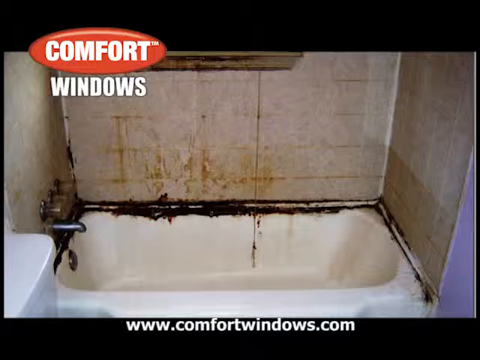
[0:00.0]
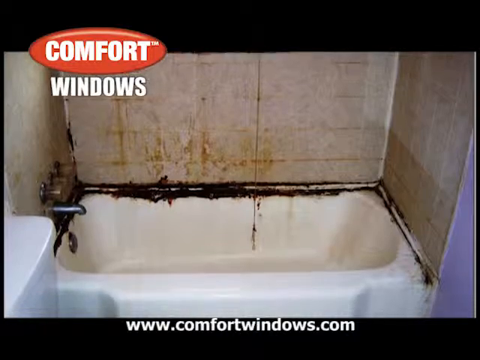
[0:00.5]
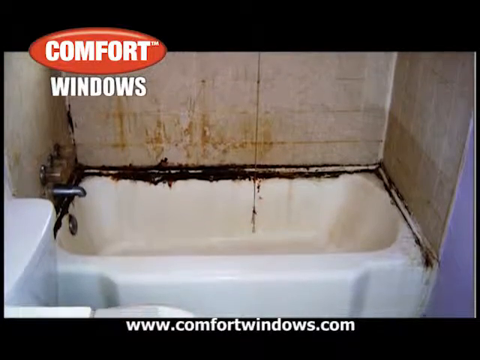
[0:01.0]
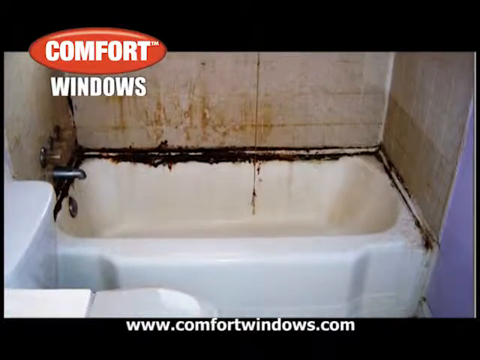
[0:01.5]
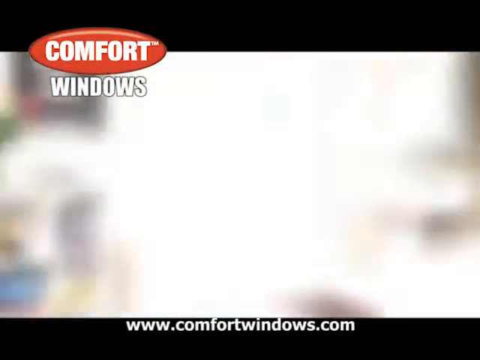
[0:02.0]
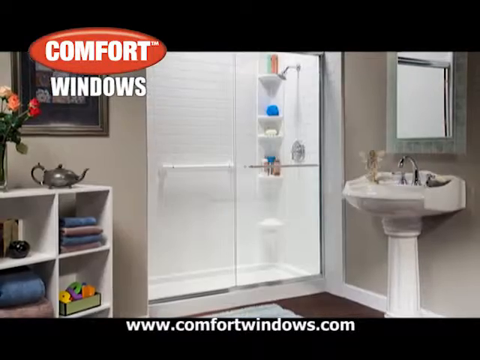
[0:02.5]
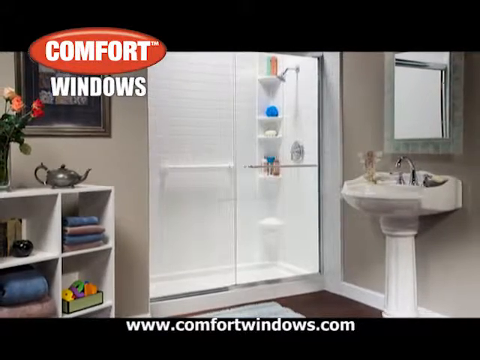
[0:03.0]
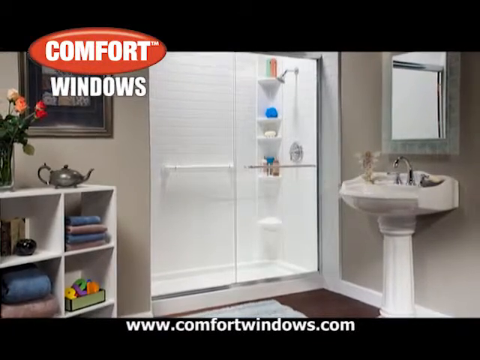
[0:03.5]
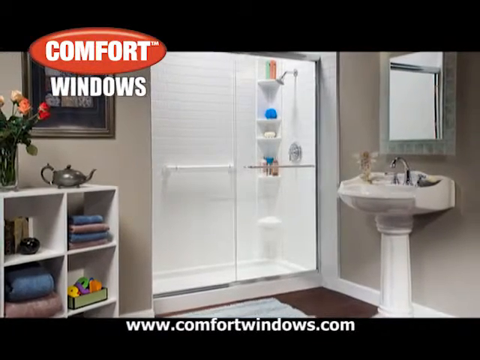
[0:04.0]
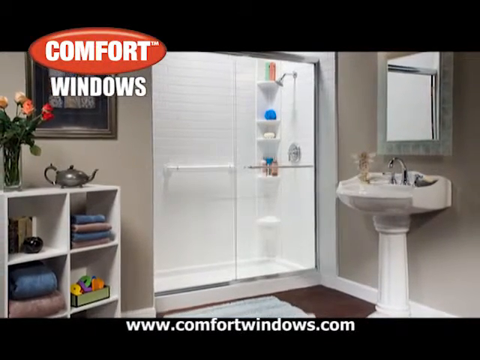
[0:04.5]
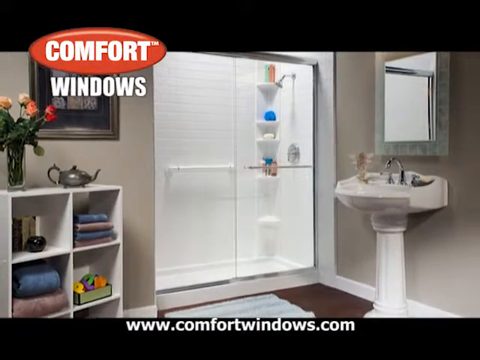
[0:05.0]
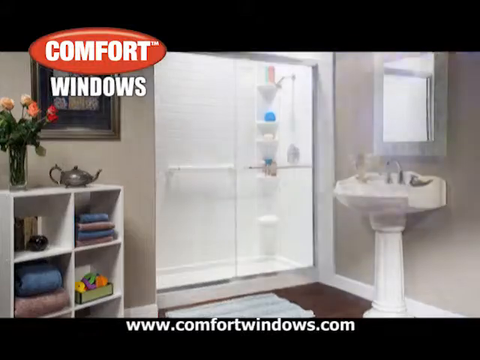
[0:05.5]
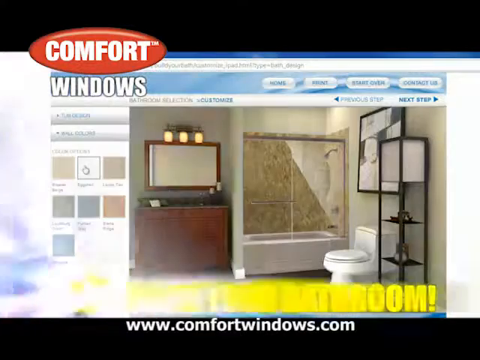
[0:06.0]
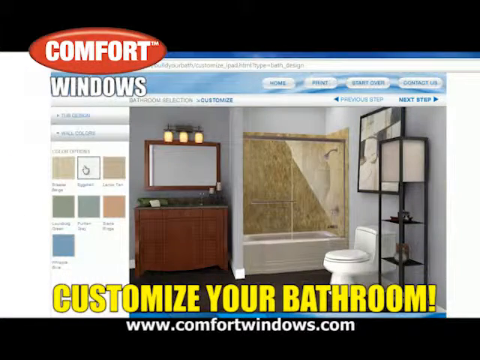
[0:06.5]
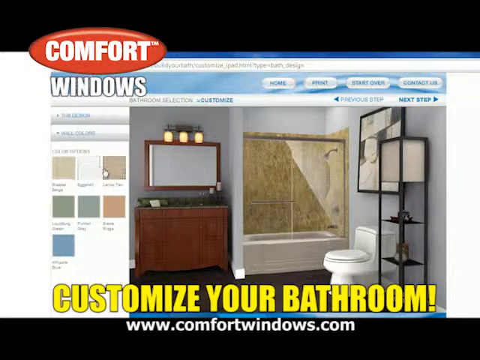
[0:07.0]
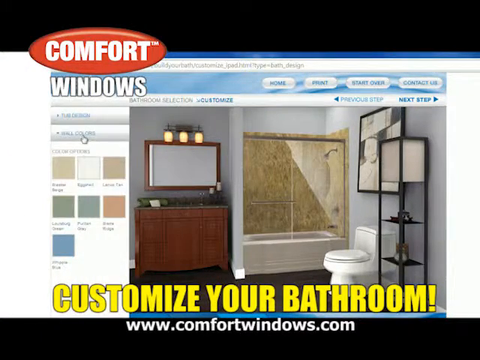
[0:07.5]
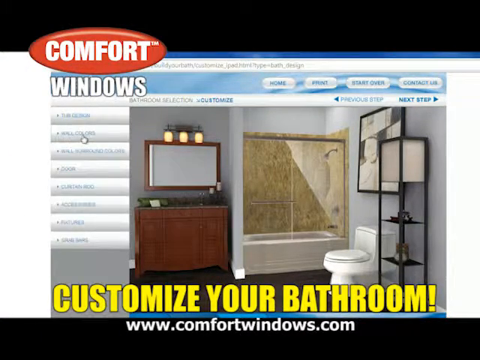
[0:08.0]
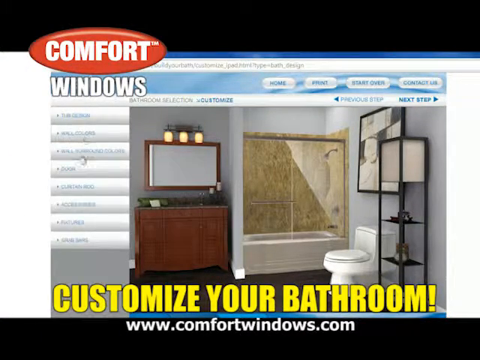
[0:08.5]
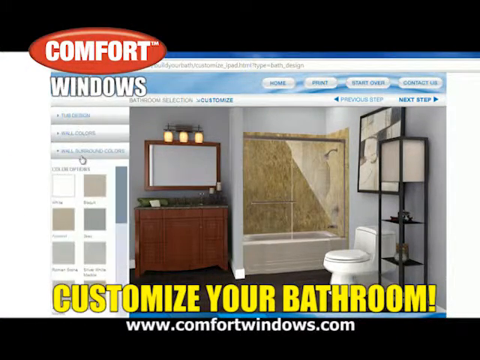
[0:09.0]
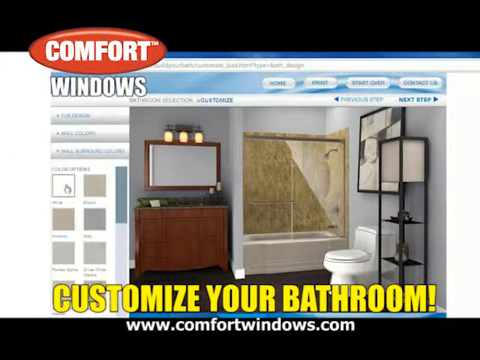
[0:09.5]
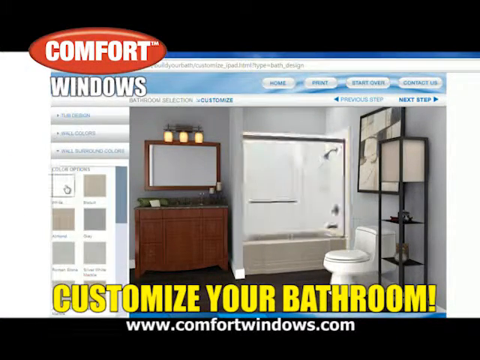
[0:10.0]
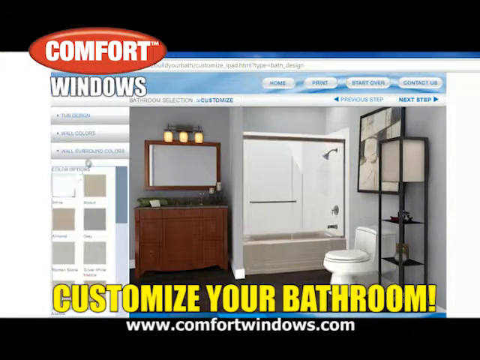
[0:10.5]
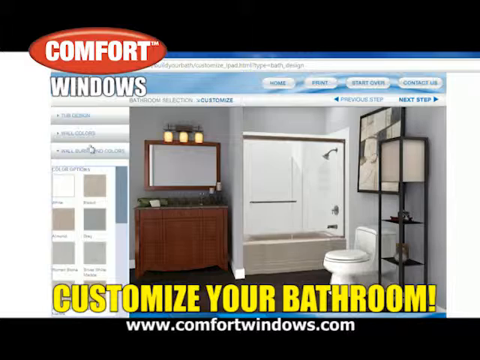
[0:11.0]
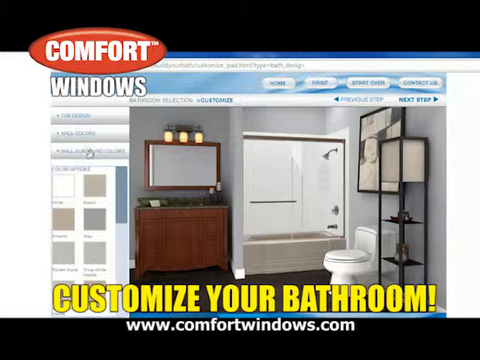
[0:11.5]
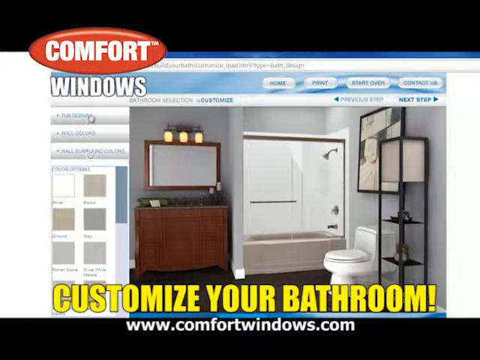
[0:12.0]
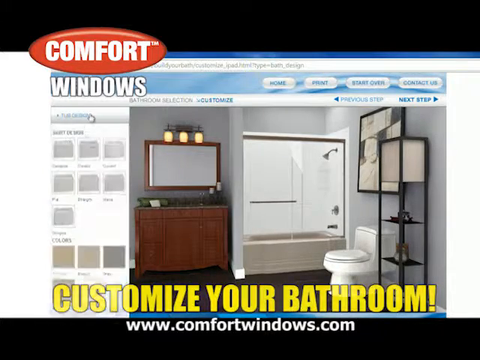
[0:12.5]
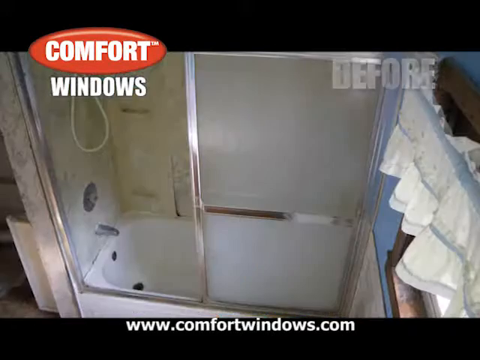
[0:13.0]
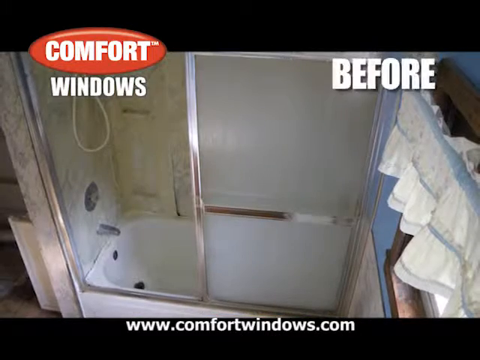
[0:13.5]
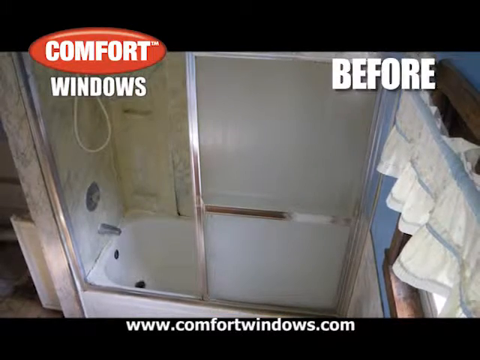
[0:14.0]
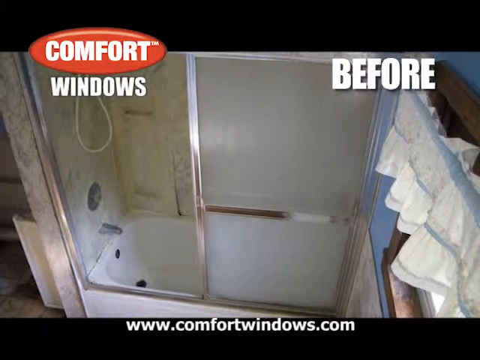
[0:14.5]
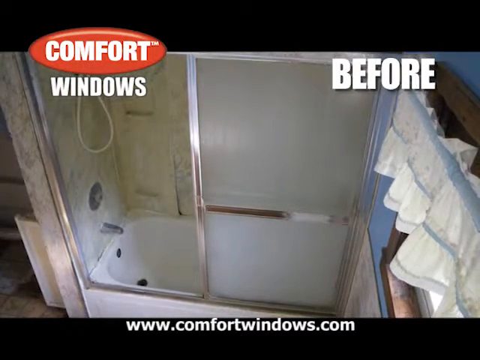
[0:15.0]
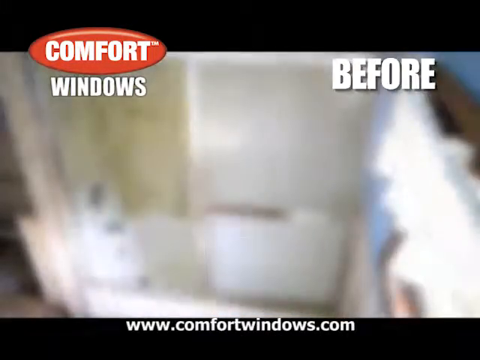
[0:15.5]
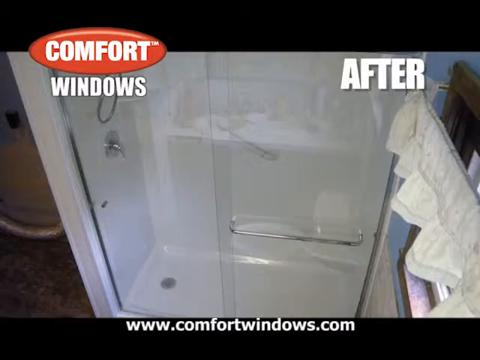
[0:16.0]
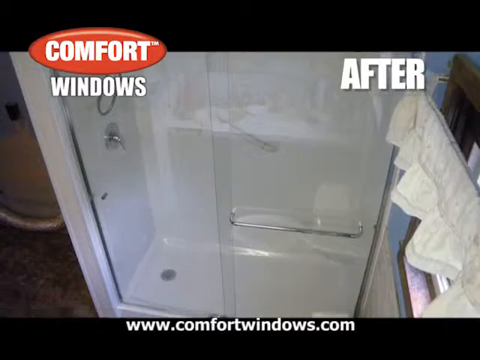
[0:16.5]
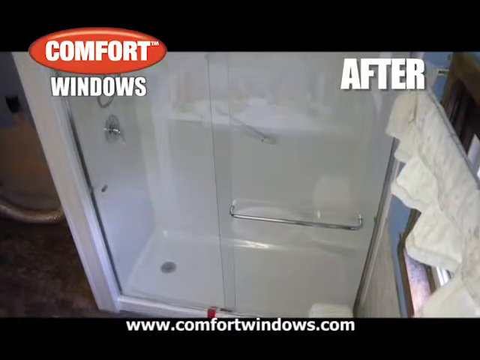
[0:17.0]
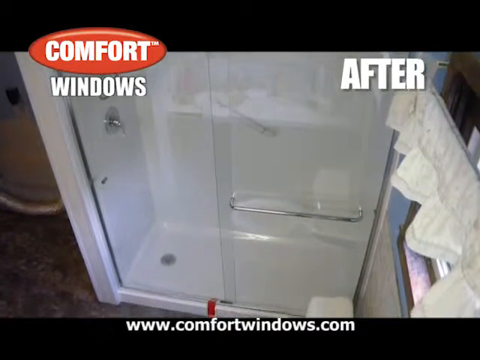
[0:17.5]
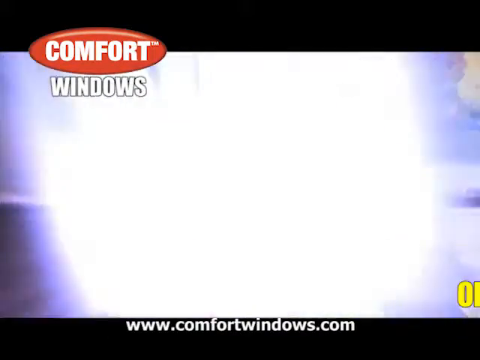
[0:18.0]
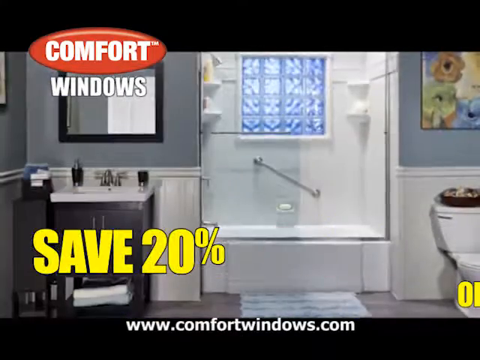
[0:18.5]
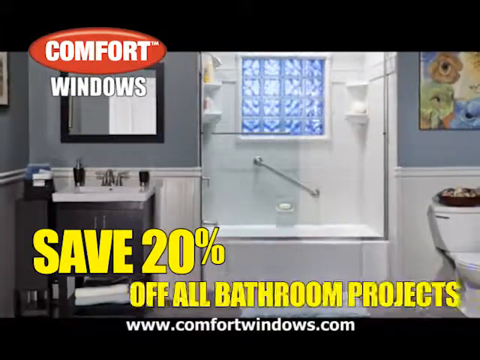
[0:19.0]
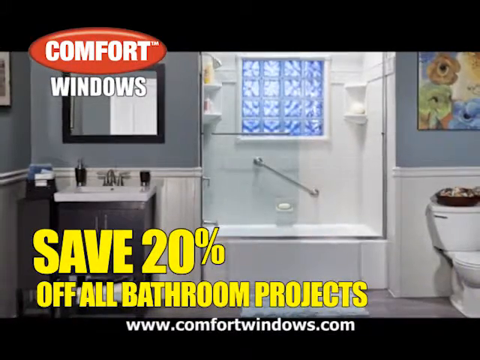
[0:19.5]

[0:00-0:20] This promotion for a company called Comfort Windows, which appears to make glass shower doors, shows before and after images of bathrooms. It begins with a bathtub that is moldy, dirty, very old and worn. The image then switches to a fully renovated bathroom with a large shower stall that has a glass door in front of it. Next comes another photo of a similar bathroom, with a menu on the left that lets someone select colors and choices for elements within the bathroom. Below this, text at the bottom of the screen says "Customize your bathroom." Before and after photos of a shower stall follow, and then text appears that says "Save 20% off all bathroom projects." Throughout, the Comfort Windows logo is in the upper left corner and the web address "www.comfortwindows.com" is at the bottom of the screen.